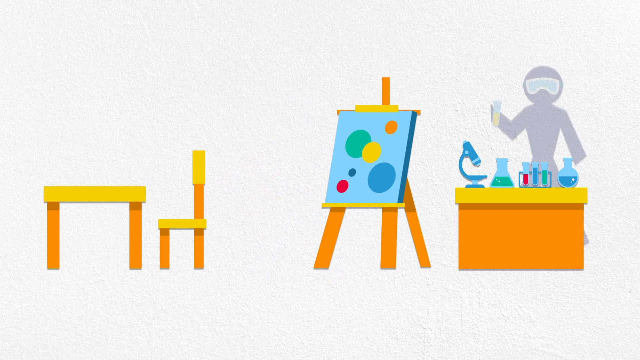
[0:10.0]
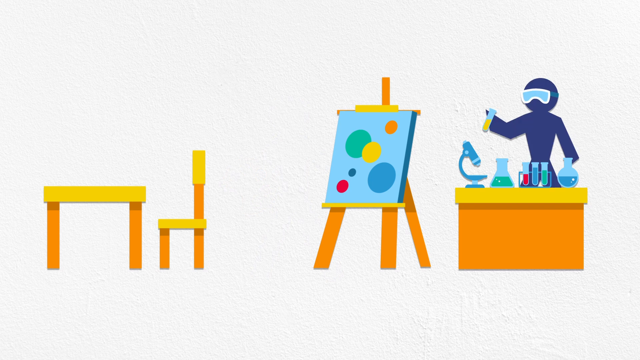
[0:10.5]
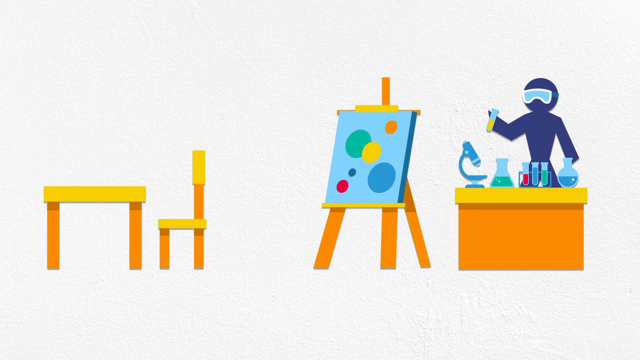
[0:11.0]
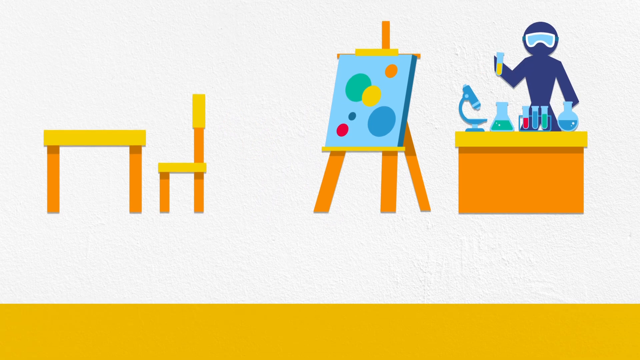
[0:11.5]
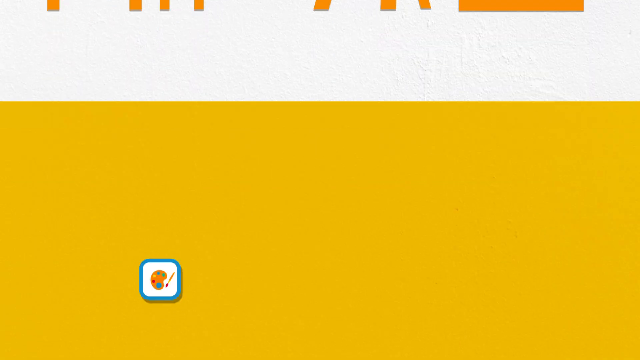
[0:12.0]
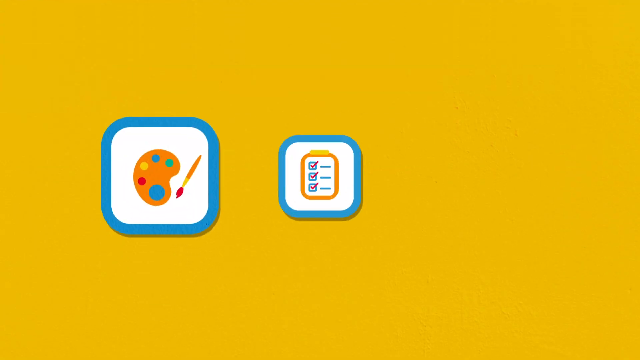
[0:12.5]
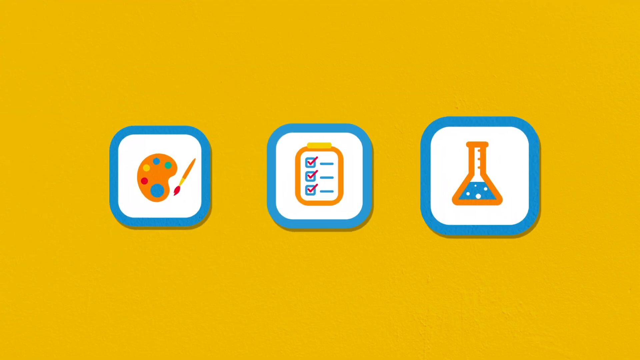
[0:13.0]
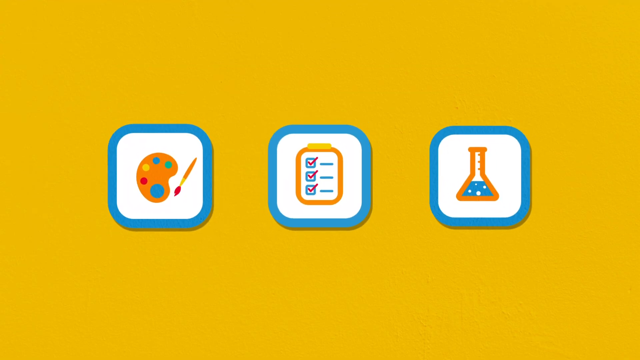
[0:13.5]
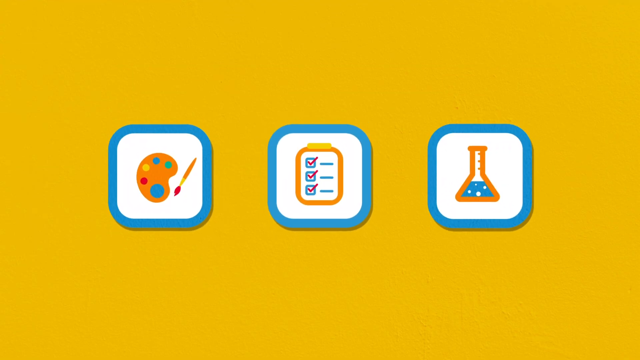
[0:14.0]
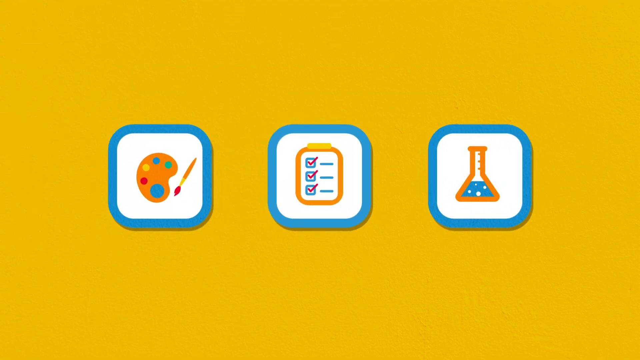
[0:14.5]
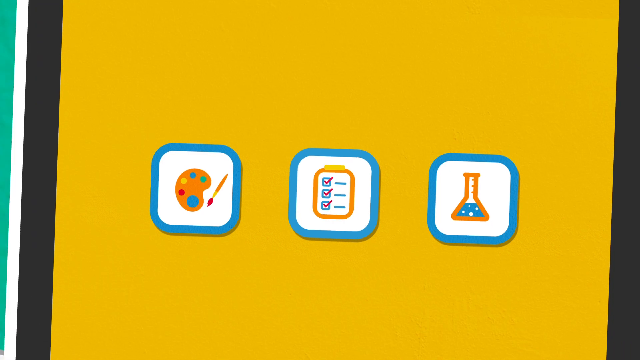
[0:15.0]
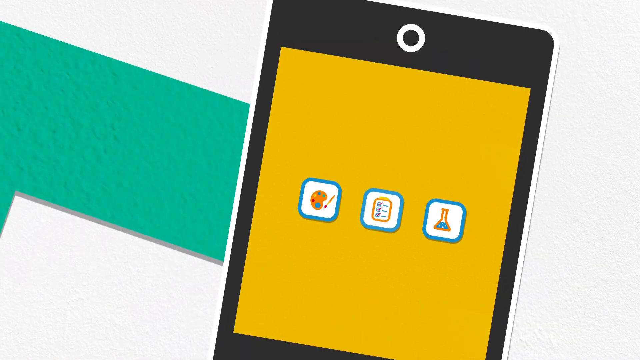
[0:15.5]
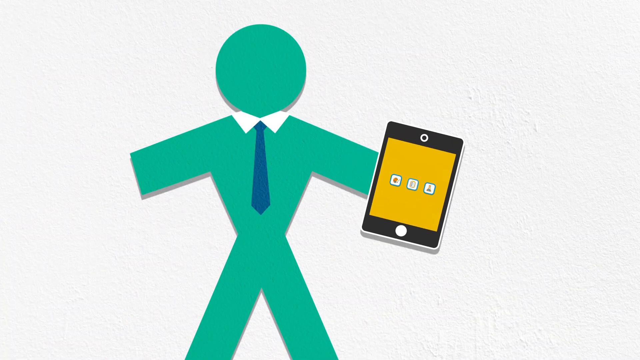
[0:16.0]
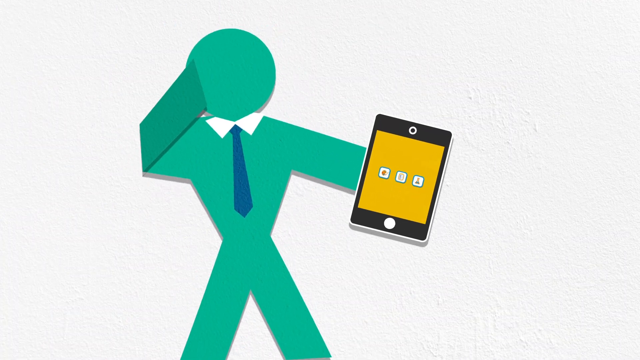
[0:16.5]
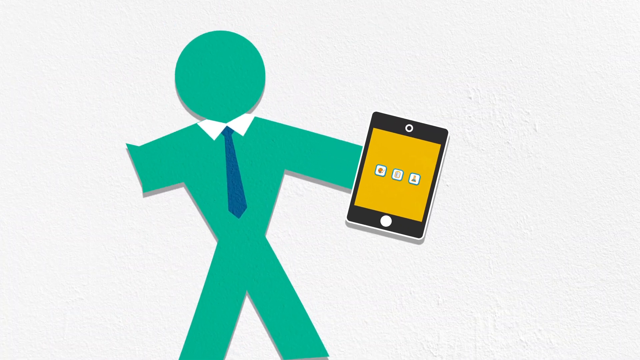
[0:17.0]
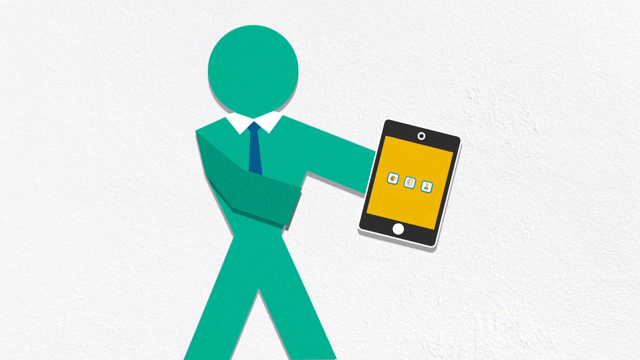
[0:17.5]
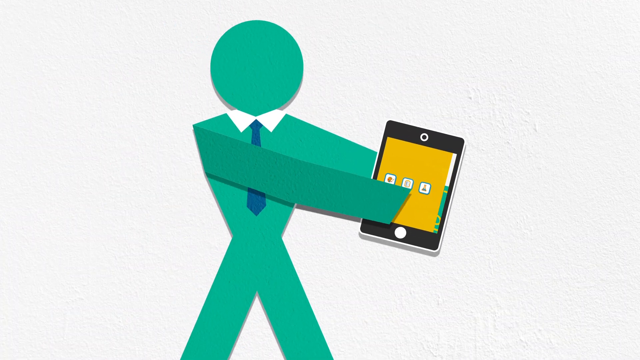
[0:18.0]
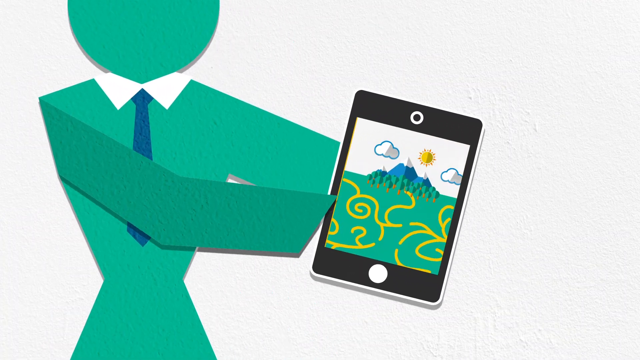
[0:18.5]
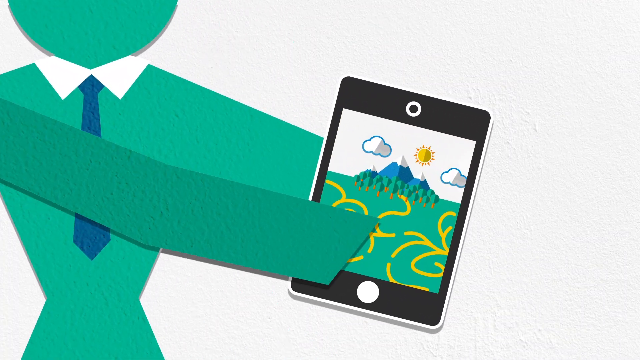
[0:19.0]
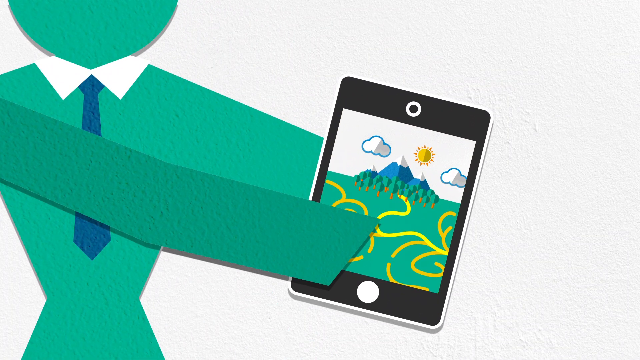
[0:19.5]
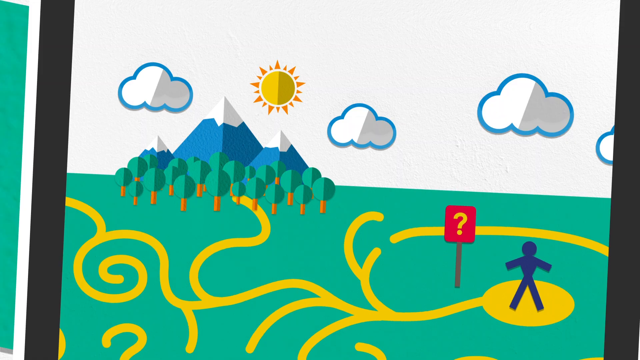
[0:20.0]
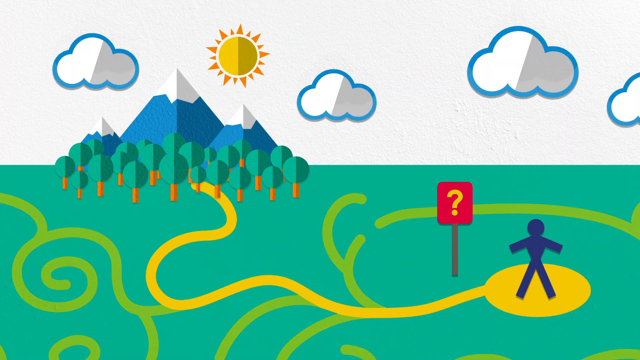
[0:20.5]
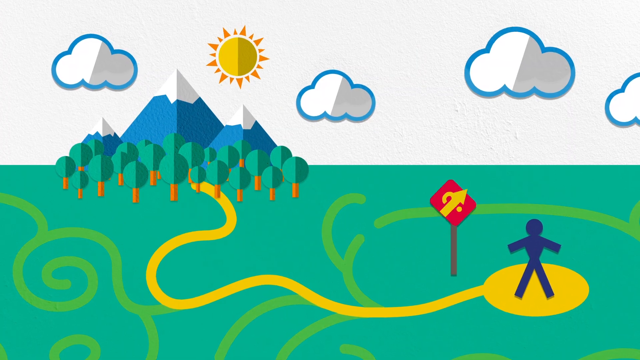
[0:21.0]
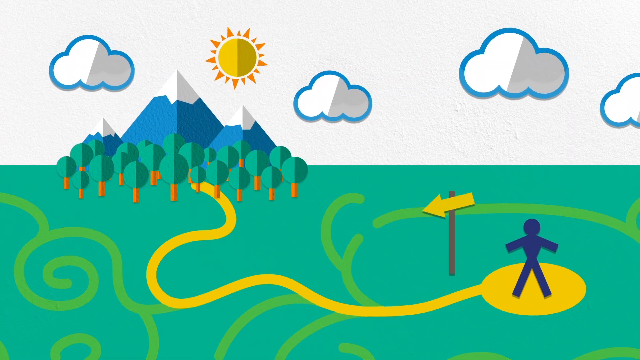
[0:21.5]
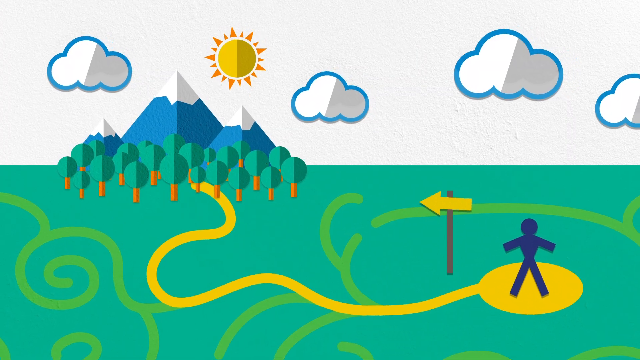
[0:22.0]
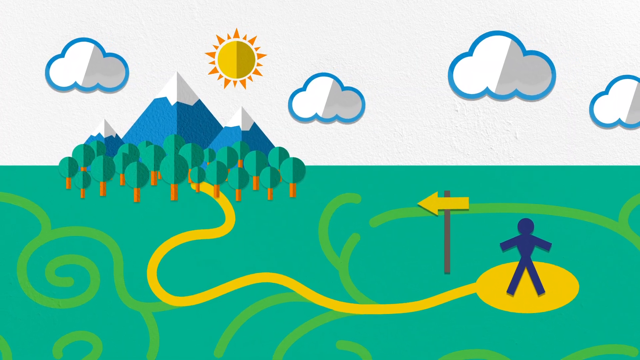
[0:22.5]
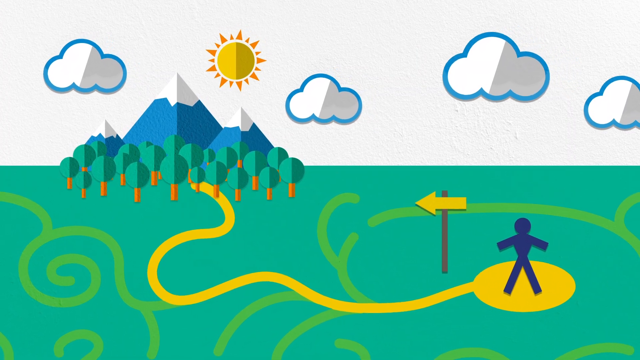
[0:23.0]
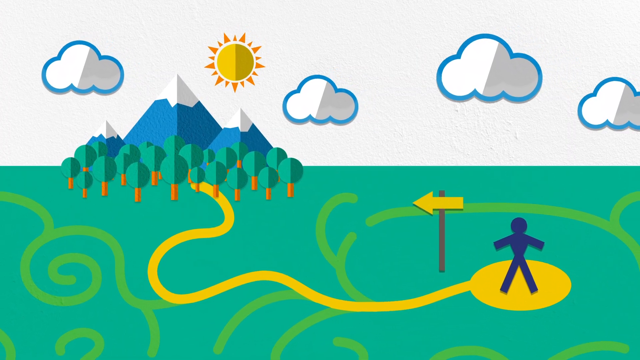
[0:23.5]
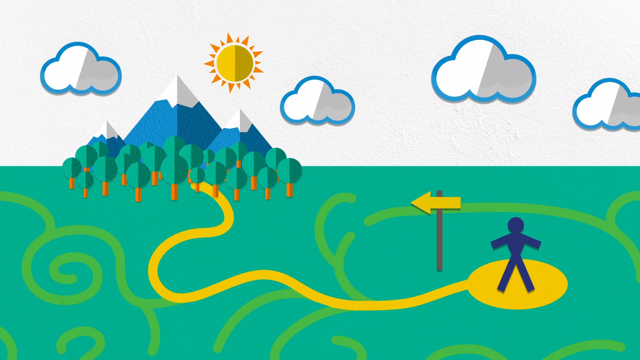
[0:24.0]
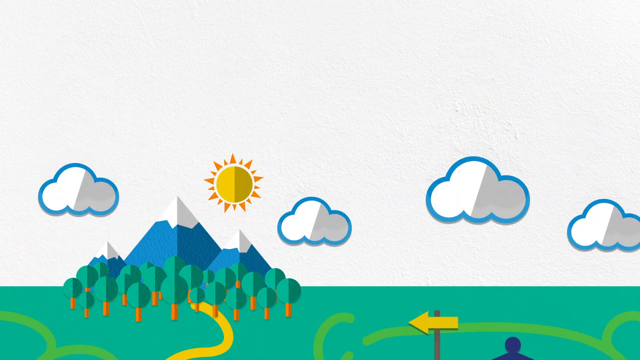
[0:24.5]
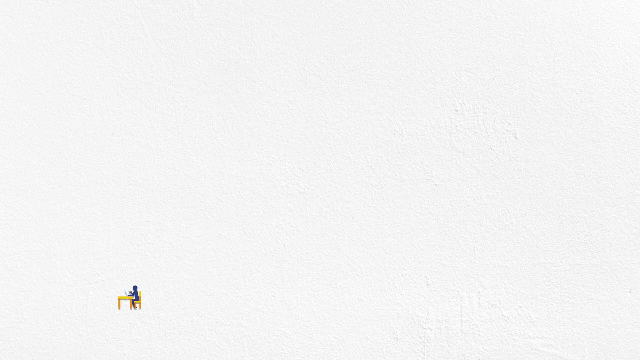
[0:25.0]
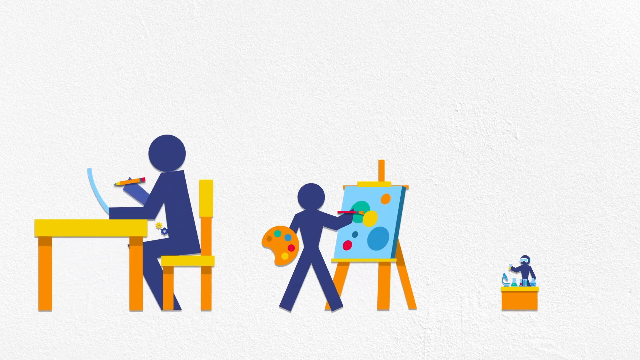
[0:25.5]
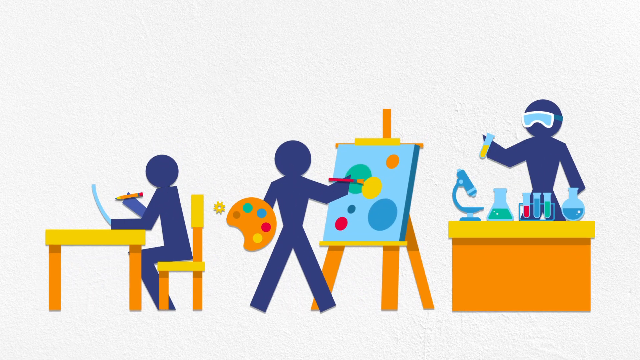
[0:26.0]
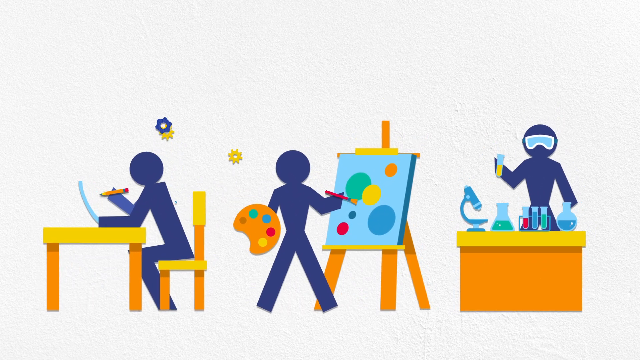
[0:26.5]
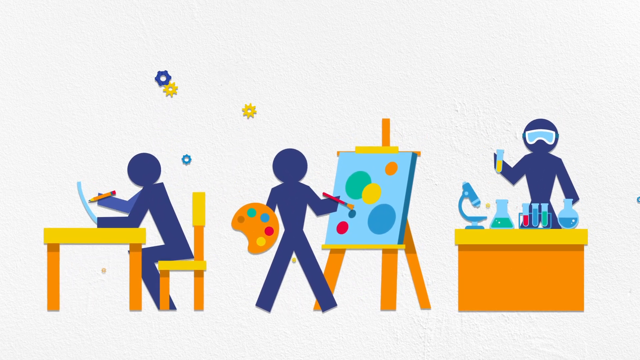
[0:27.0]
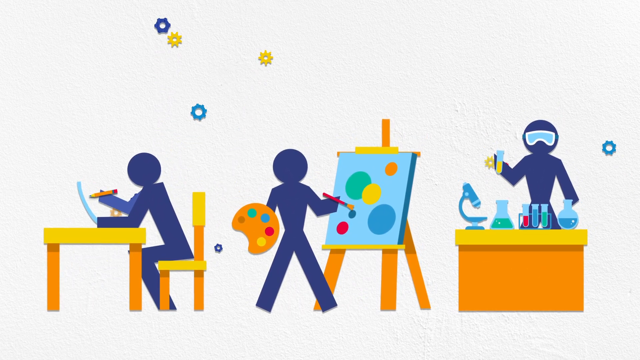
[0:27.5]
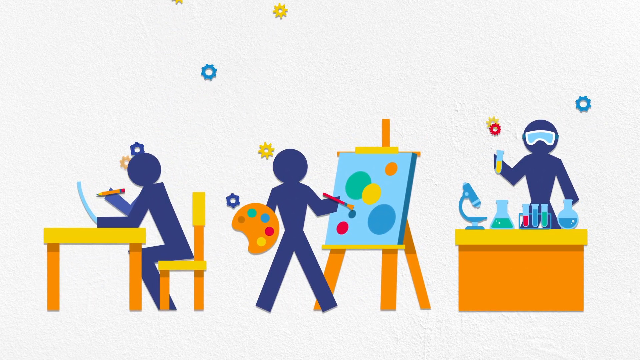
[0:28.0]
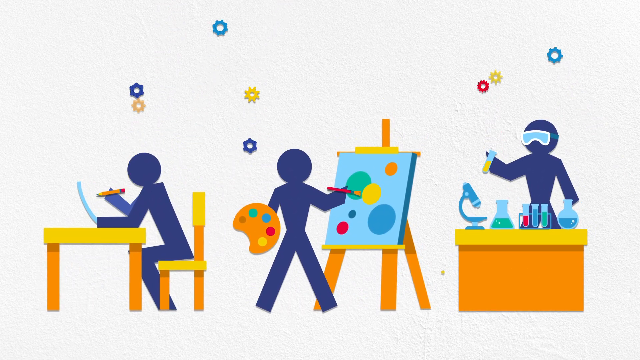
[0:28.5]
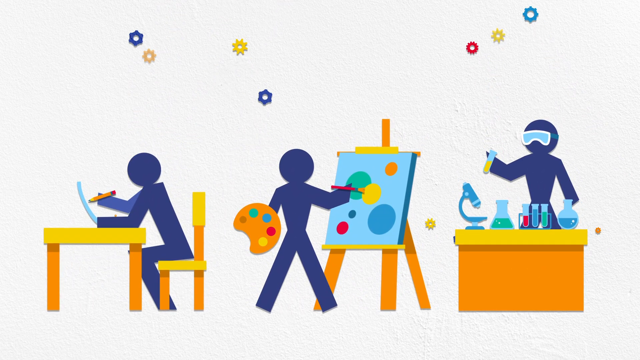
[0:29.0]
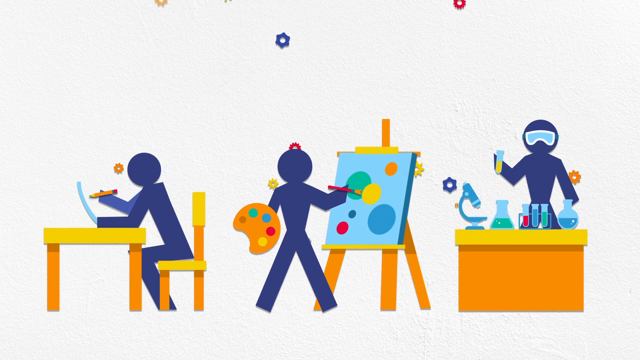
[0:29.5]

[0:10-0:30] The purple character paints on a big canvas that has a blue cover, using different colors to make shapes that are dots. Behind the canvas is a science table. The character jumps onto the science desk, puts on science glasses and starts working with the science tools. The scene changes to a yellow background with three displays: painting, a checklist and a science beaker sign, and these three icons are covered by blue. The view zooms out to reveal a black phone held by a green character wearing a tie. This character zooms back into the first scene and changes the question mark sign into an arrow that keeps moving, leaving only one path in the scene. Next, the purple character becomes three, doing three things at once: one sits on a chair near a desk writing, one paints on a canvas, and one is busy with science tools.